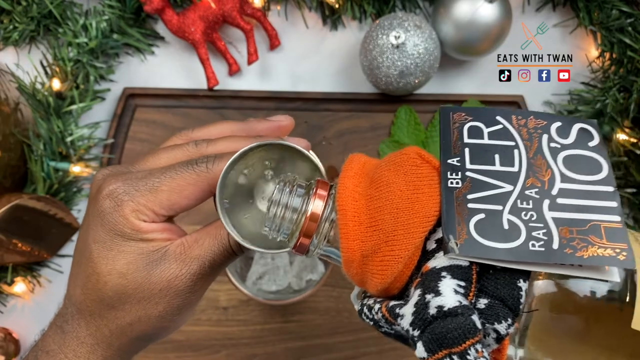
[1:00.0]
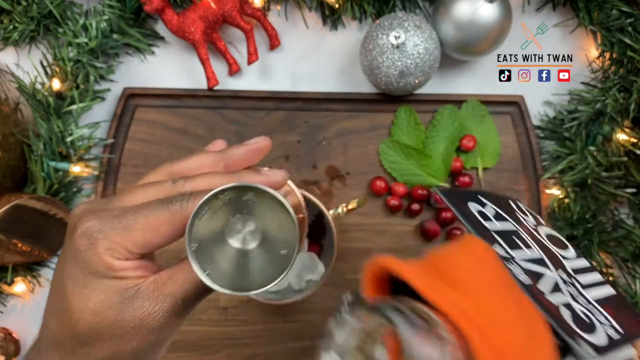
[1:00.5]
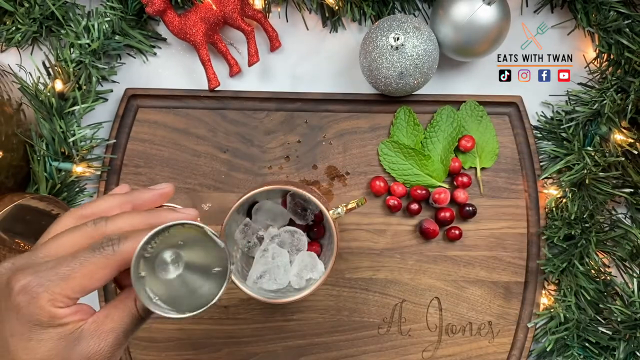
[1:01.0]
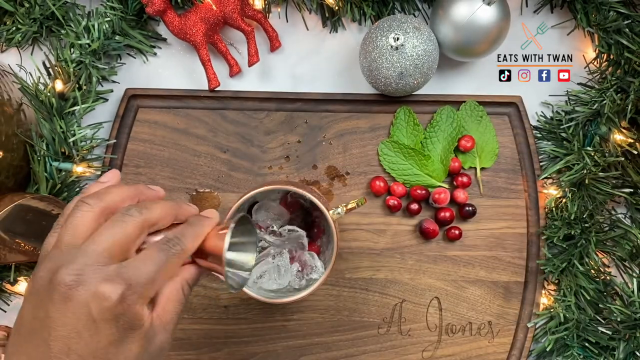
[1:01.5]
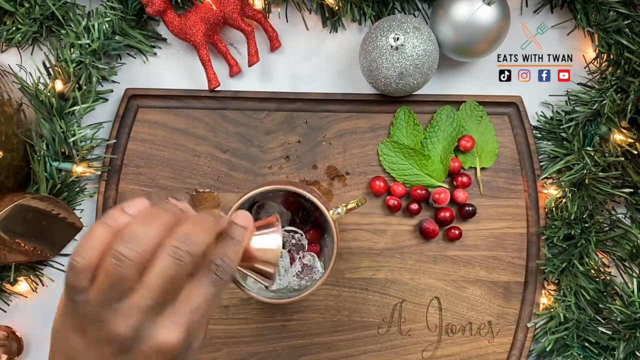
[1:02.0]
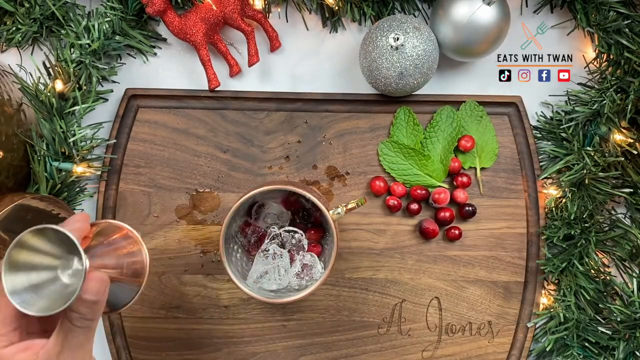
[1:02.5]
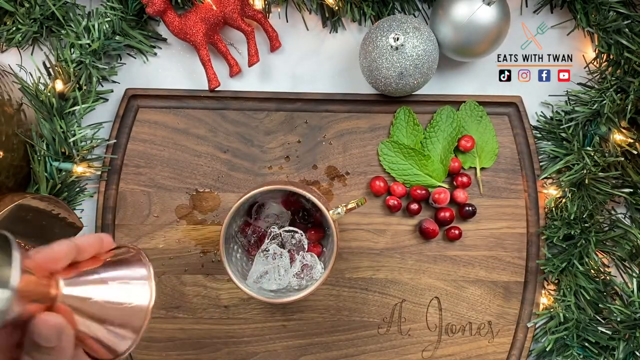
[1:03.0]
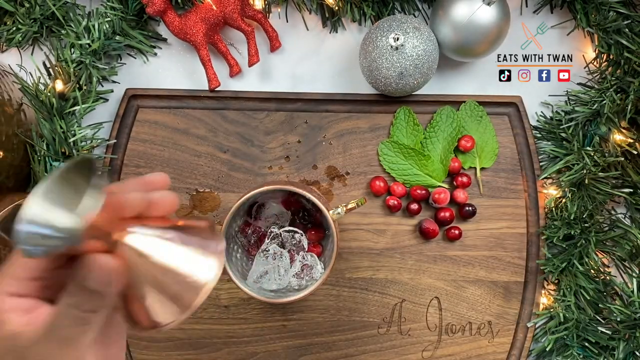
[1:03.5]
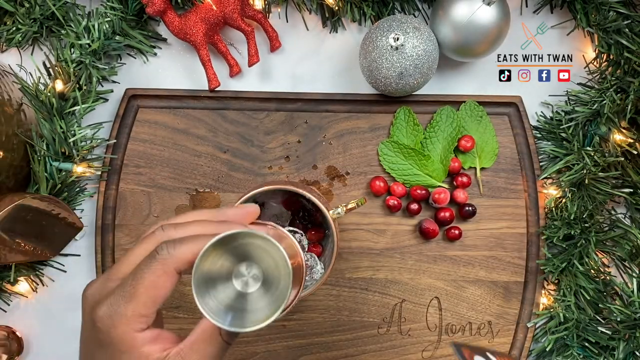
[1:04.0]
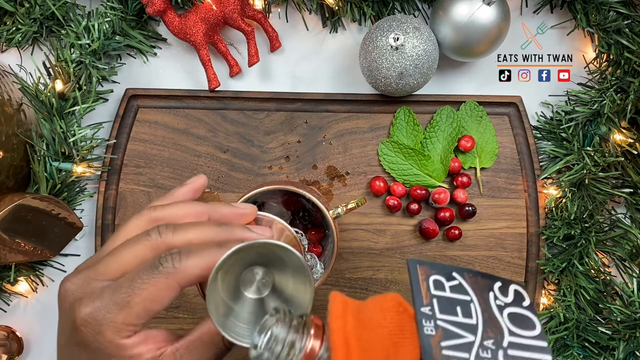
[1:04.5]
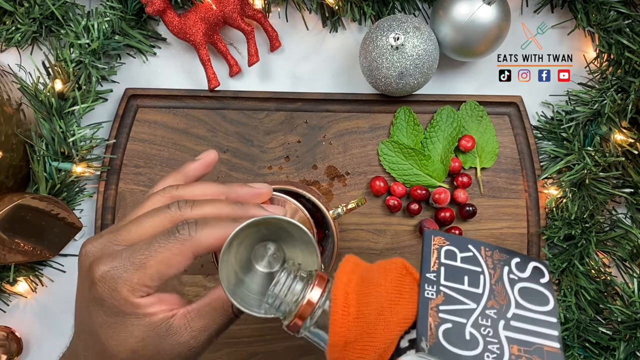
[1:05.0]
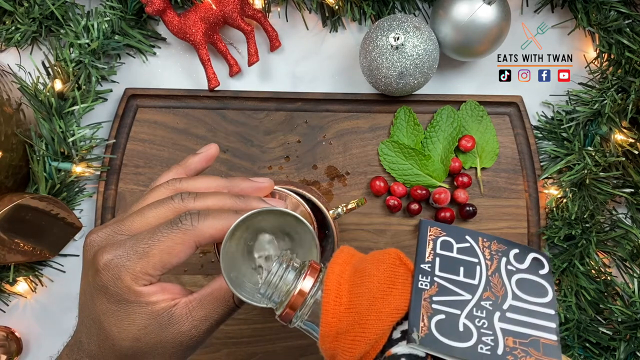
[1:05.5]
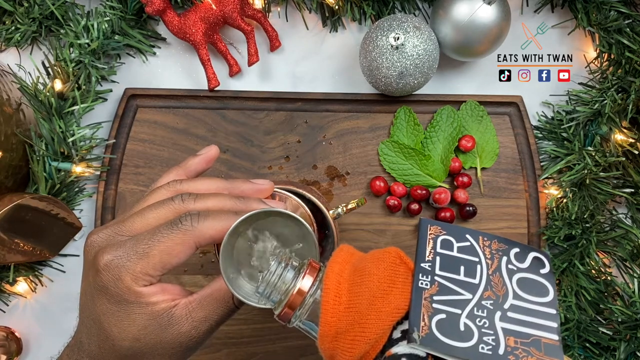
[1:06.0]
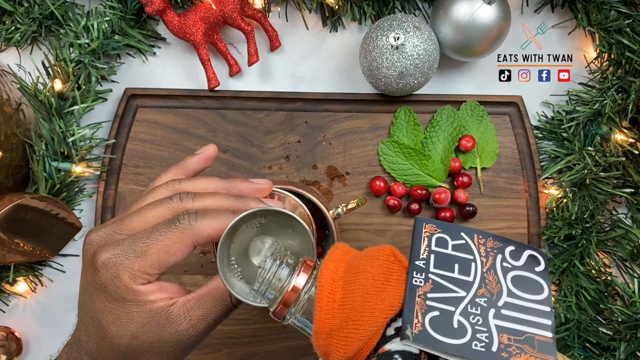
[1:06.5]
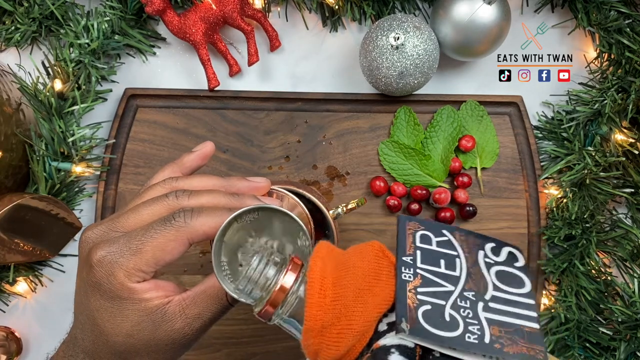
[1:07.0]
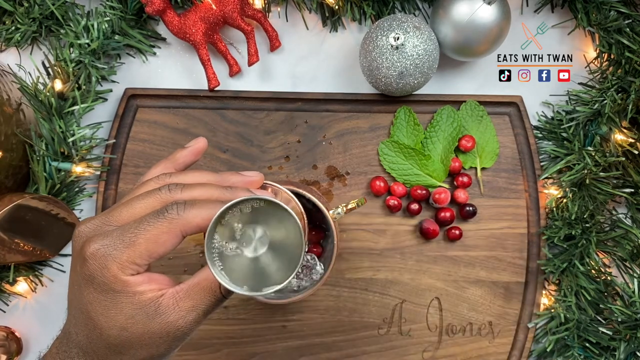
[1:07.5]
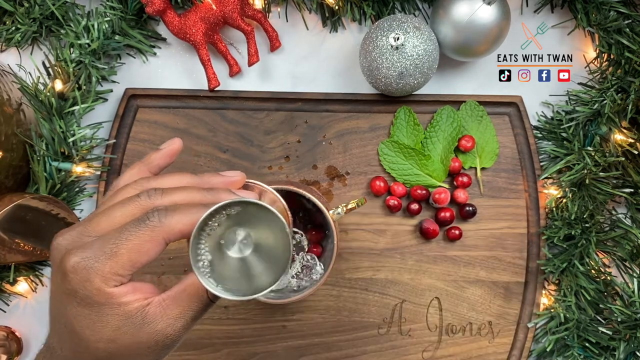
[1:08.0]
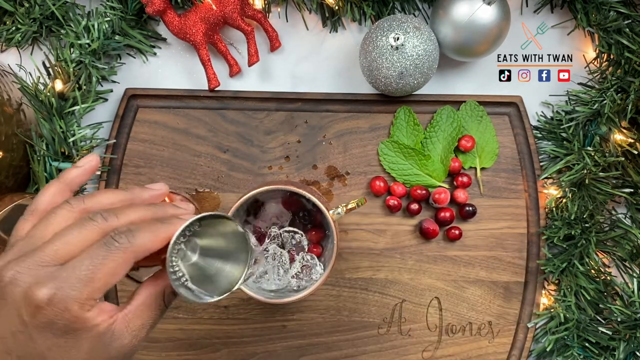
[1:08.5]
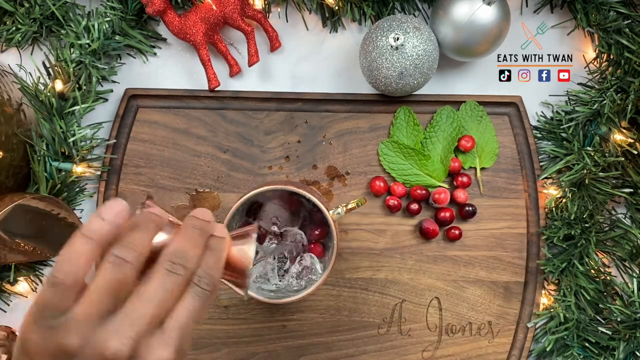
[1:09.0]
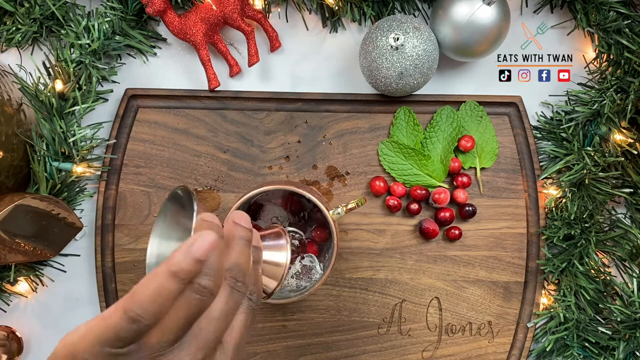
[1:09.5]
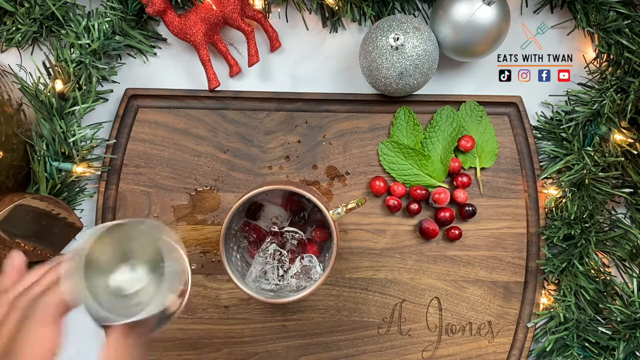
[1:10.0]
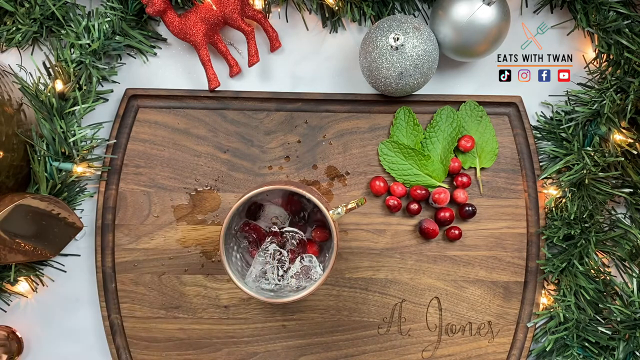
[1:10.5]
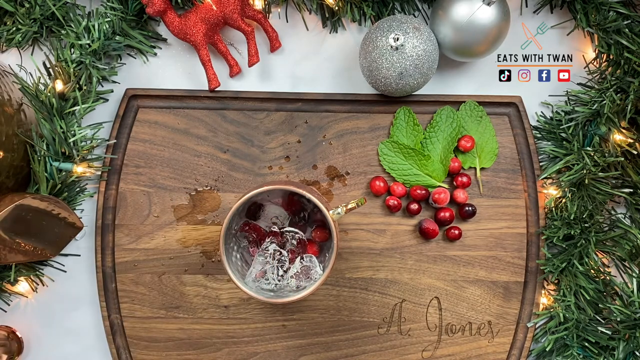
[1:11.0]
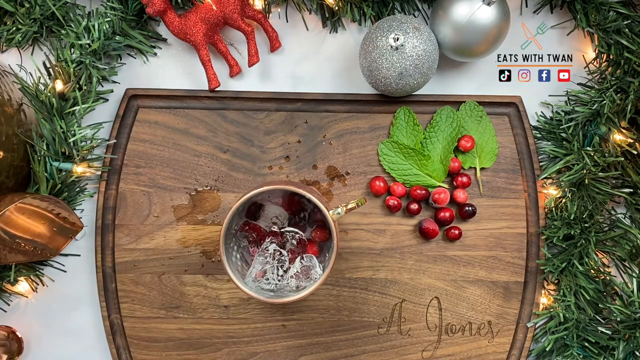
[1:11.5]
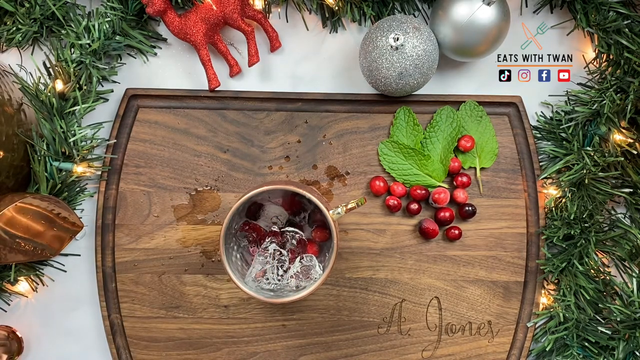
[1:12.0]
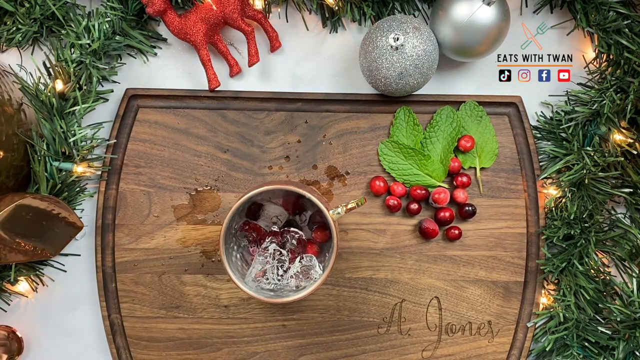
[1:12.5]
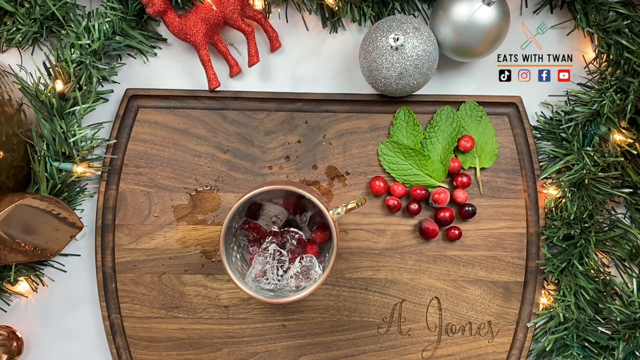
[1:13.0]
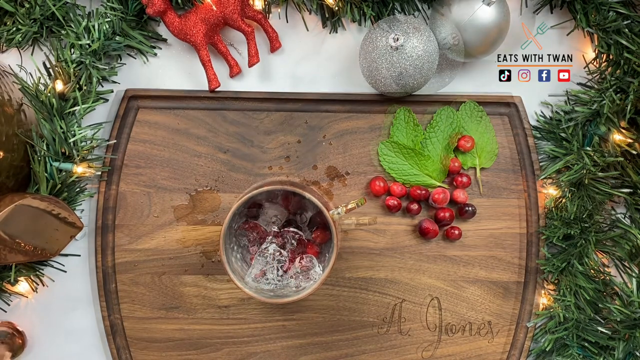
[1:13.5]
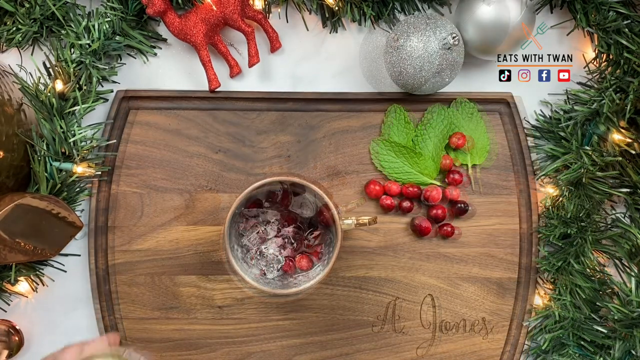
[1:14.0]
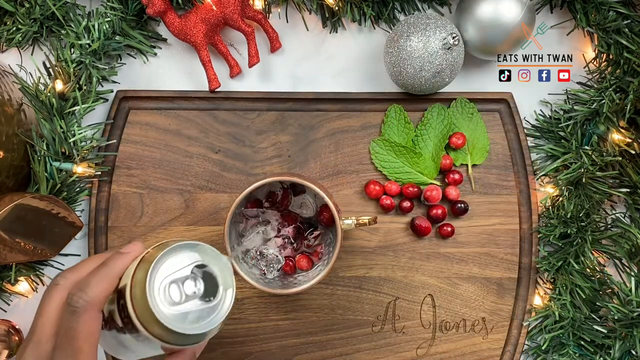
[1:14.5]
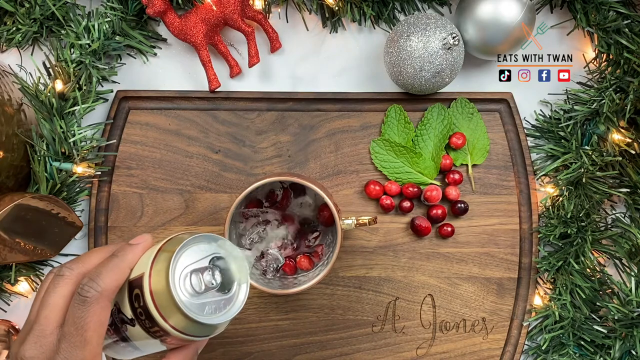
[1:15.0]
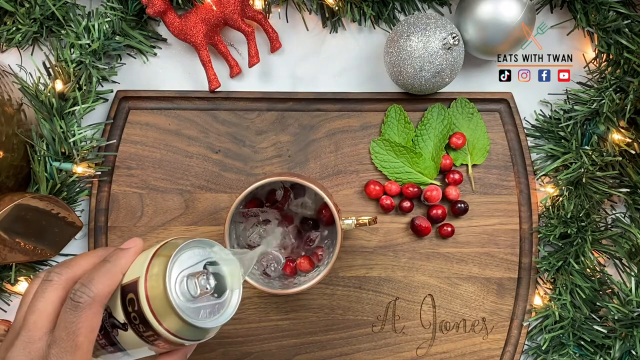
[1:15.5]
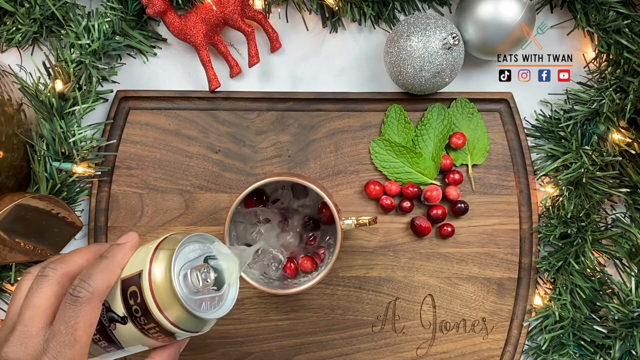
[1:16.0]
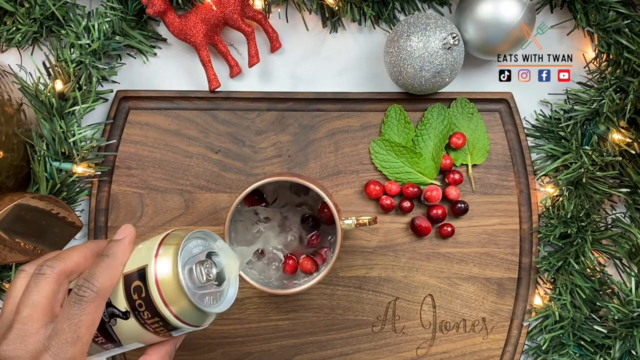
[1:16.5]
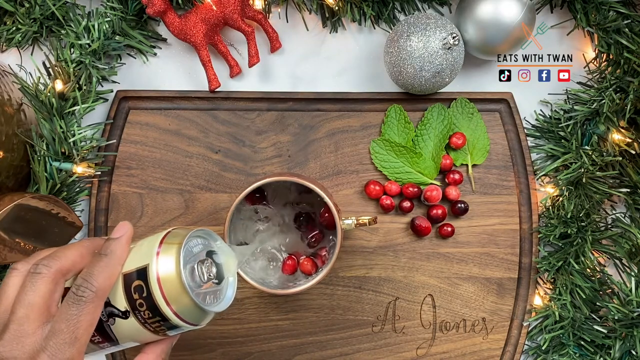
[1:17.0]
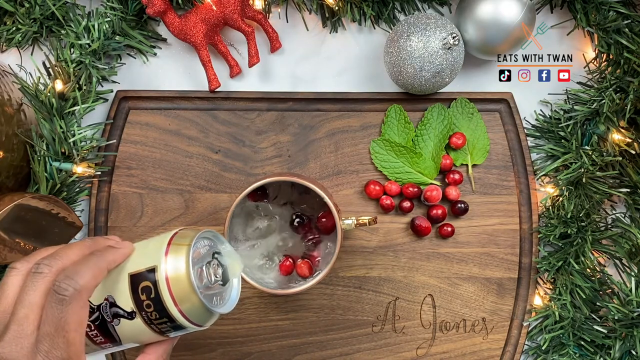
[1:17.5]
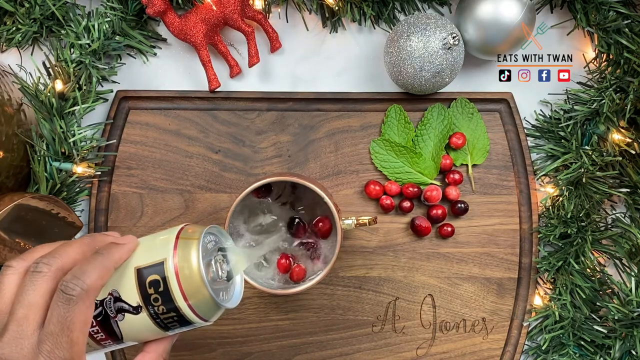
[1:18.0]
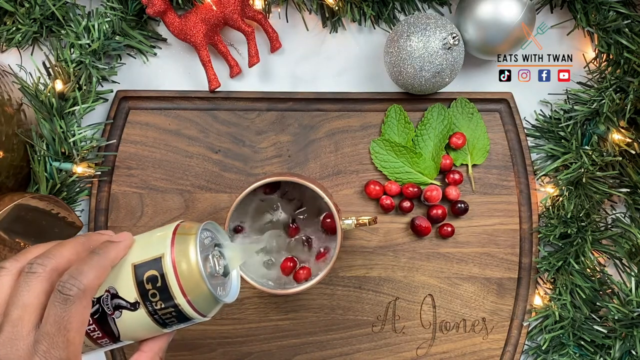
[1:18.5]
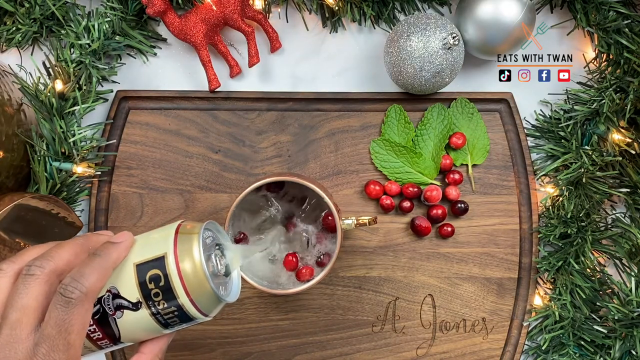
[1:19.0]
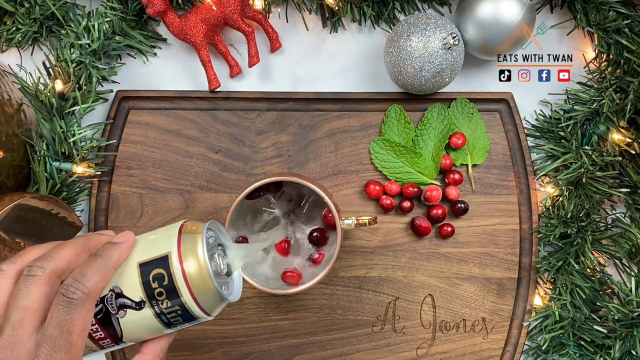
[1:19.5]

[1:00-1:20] Seen from the top of the cutting board, an individual's hands are up close to the camera from his point of view as he pours an alcoholic drink from a glass bottle into a cup, then pours it into a big mug on the cutting board. He pours another cup of the alcoholic drink into the little silver glass cup and continues pouring, spilling some of the drink along the side of the mug. He then pours a can of beer or another alcoholic drink into the mug, which has pomegranates in it; the drink looks to be fizzing and kind of carbonated as he keeps pouring it into the cup on the cutting board.